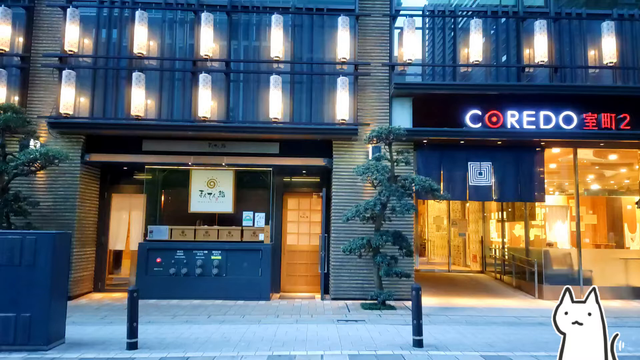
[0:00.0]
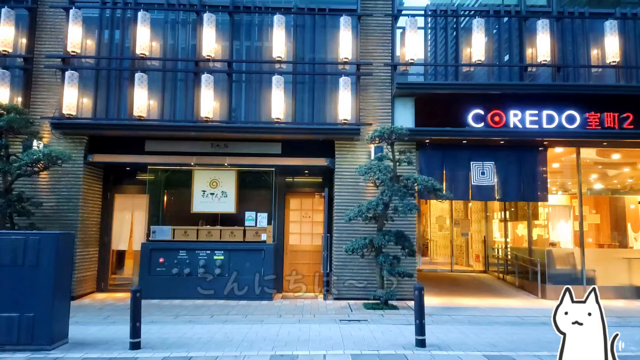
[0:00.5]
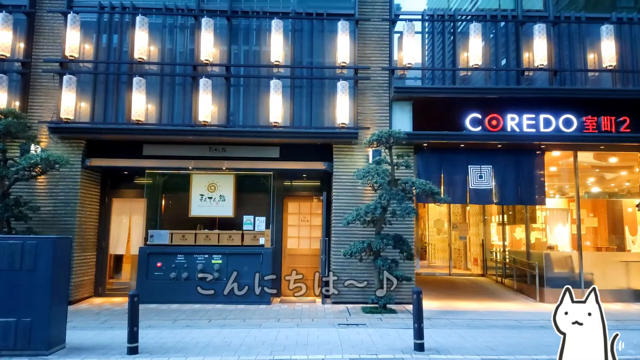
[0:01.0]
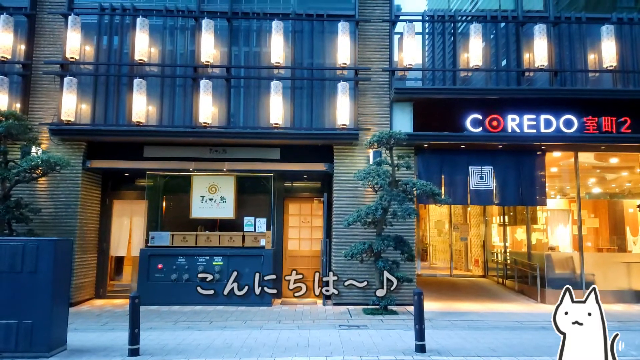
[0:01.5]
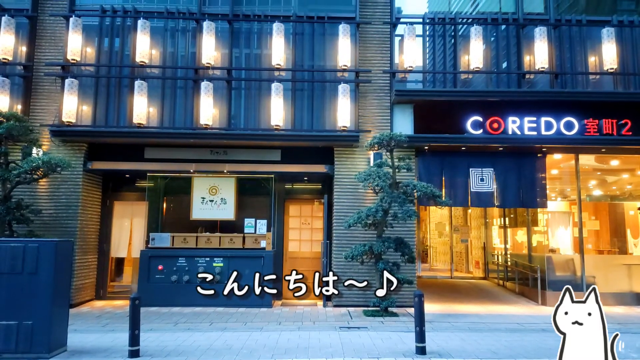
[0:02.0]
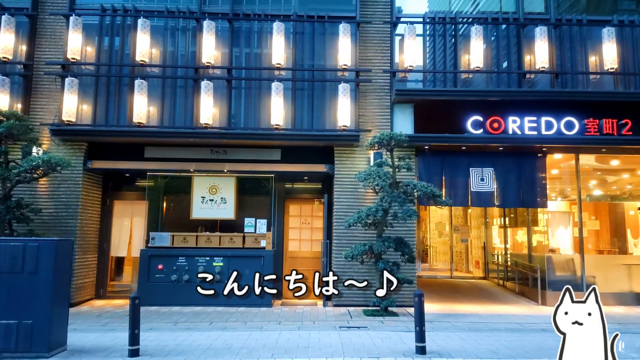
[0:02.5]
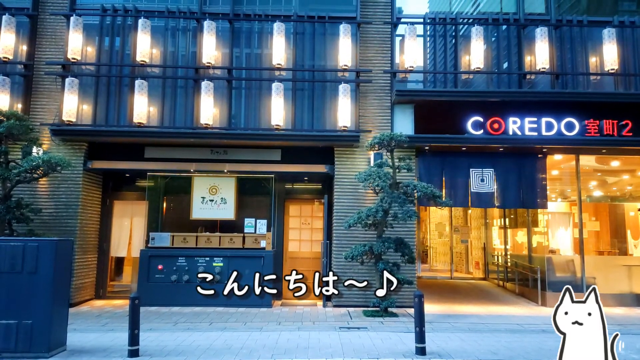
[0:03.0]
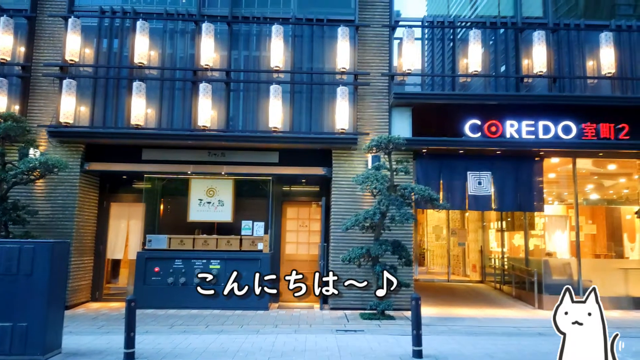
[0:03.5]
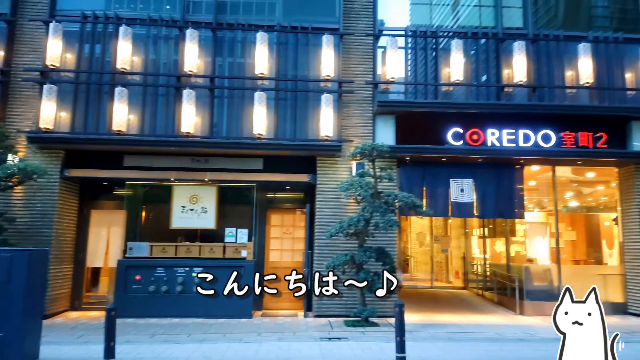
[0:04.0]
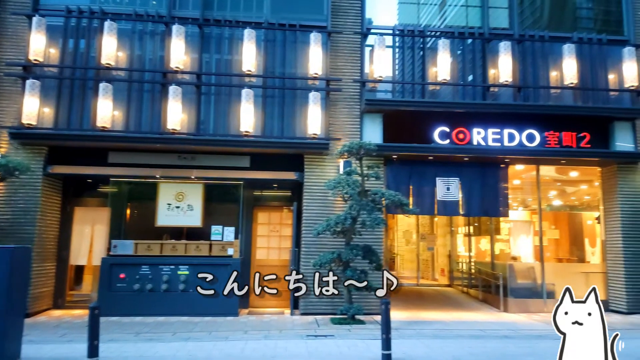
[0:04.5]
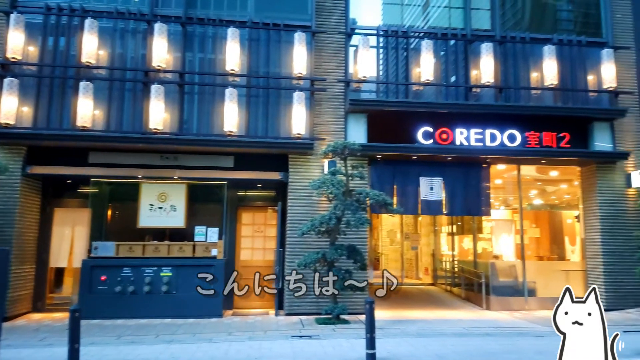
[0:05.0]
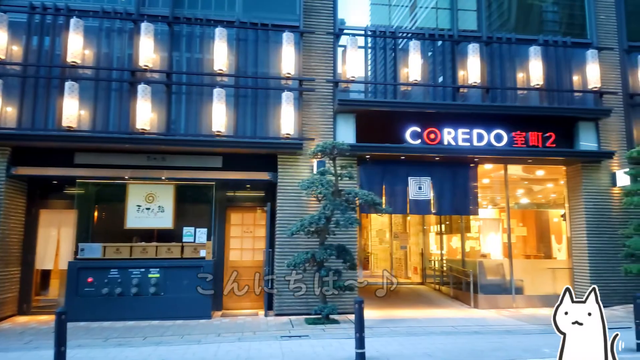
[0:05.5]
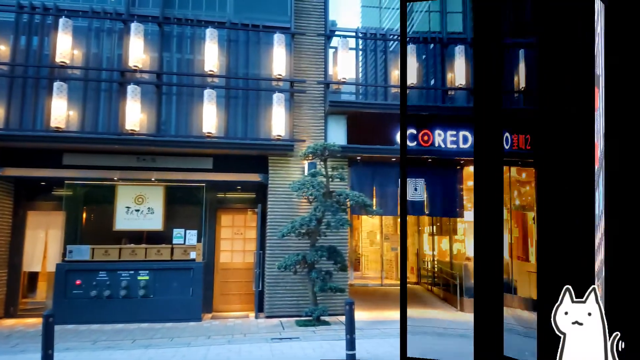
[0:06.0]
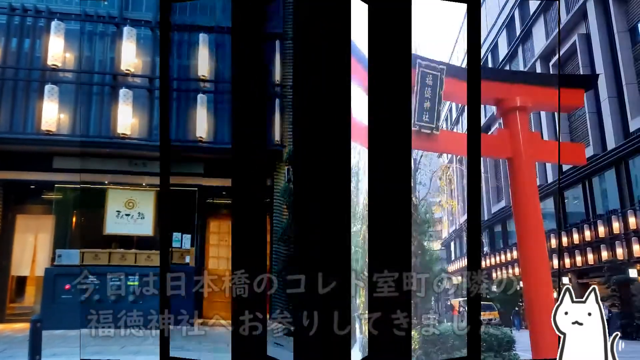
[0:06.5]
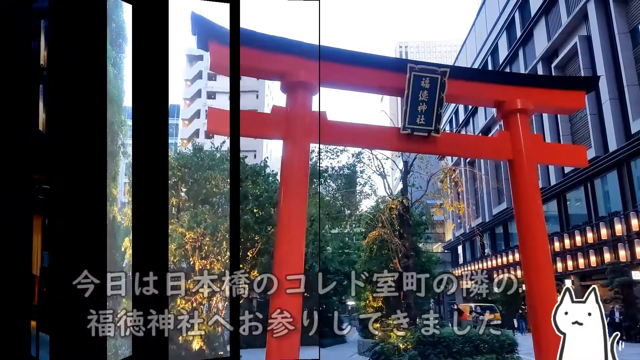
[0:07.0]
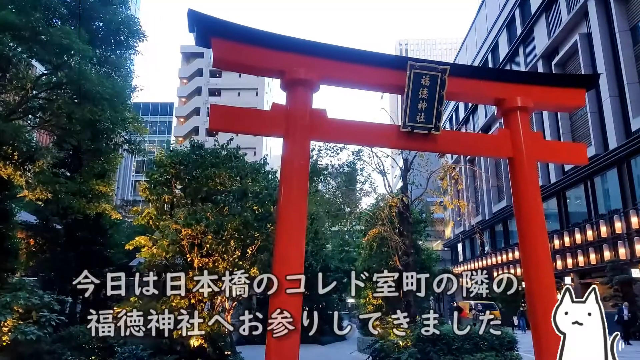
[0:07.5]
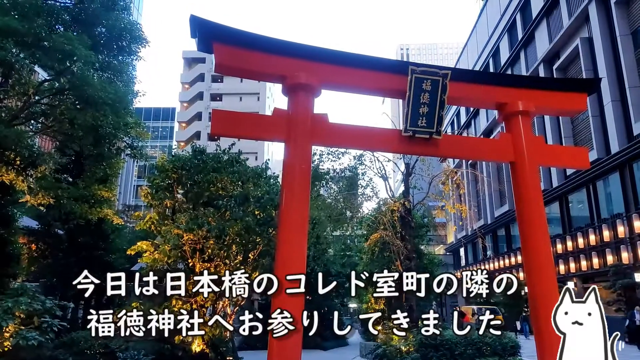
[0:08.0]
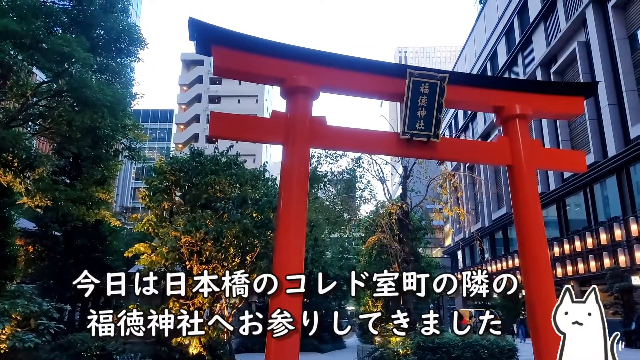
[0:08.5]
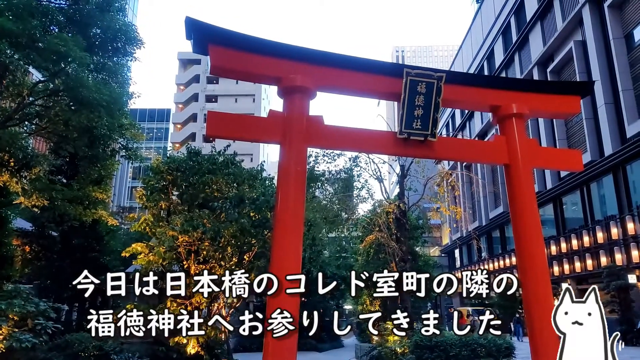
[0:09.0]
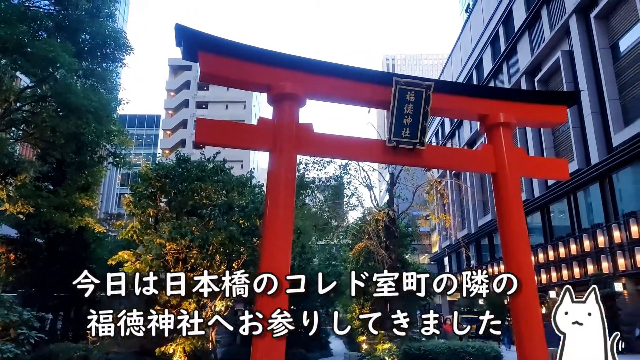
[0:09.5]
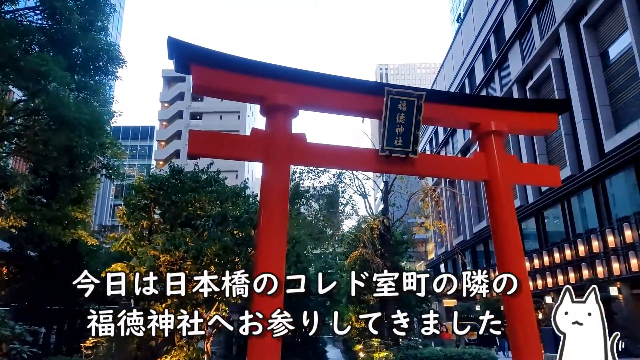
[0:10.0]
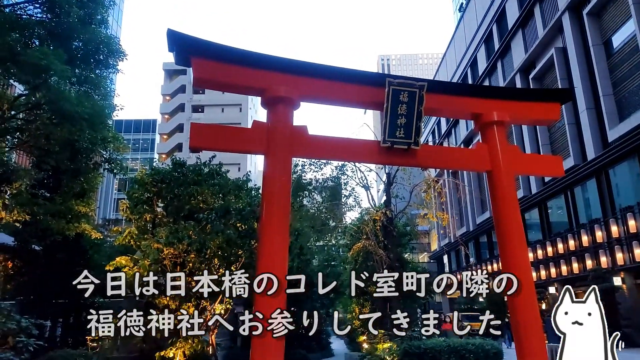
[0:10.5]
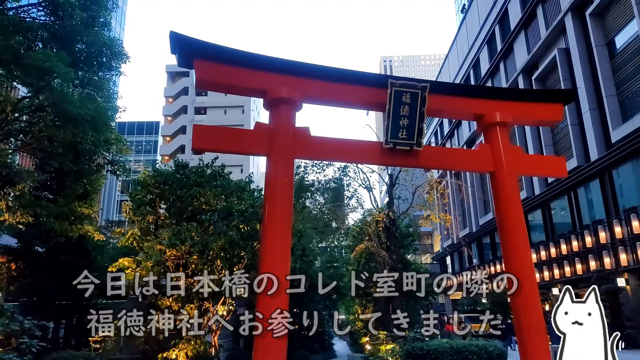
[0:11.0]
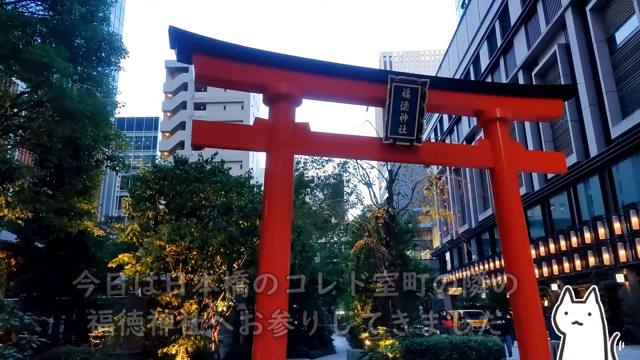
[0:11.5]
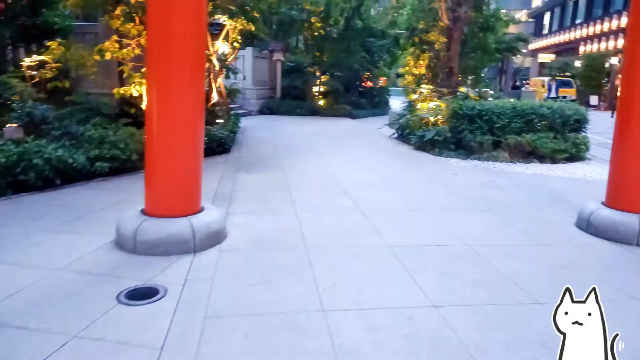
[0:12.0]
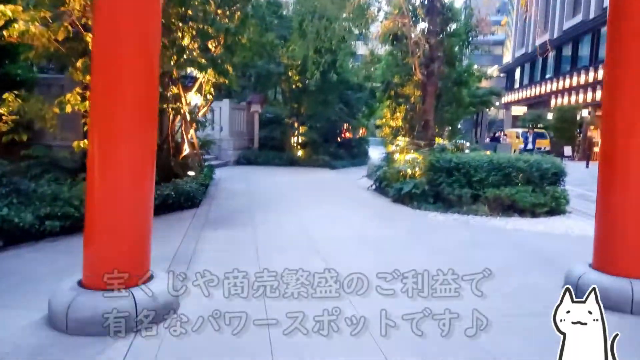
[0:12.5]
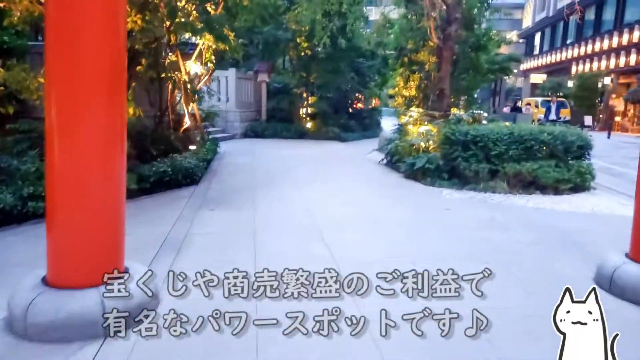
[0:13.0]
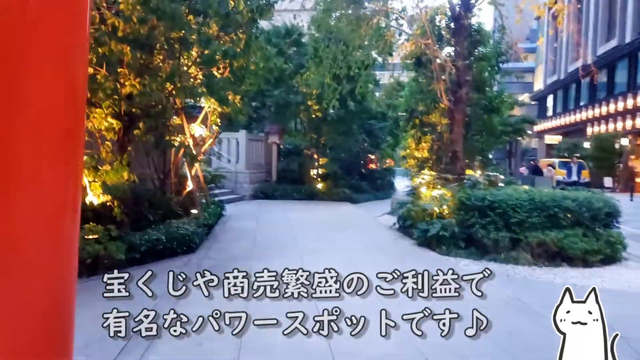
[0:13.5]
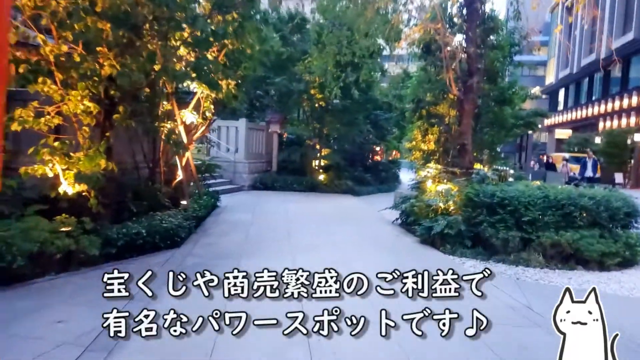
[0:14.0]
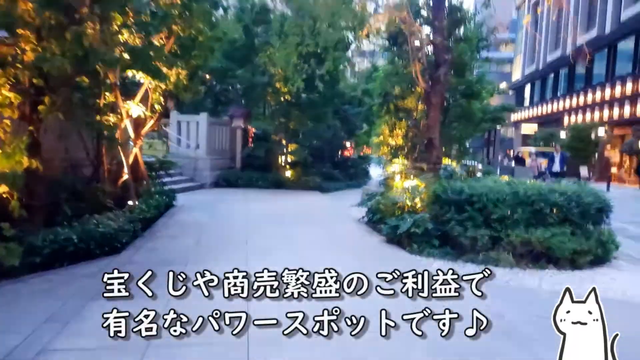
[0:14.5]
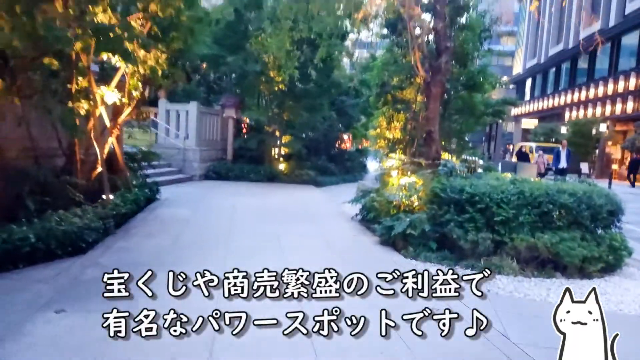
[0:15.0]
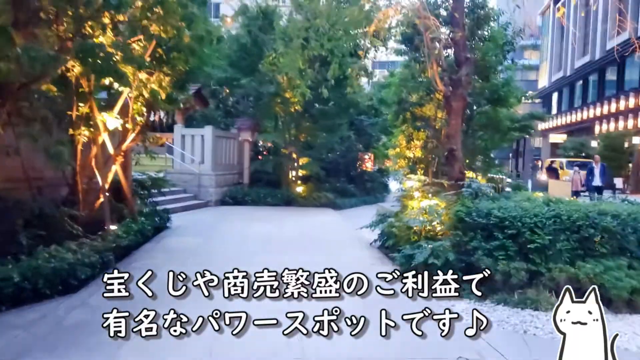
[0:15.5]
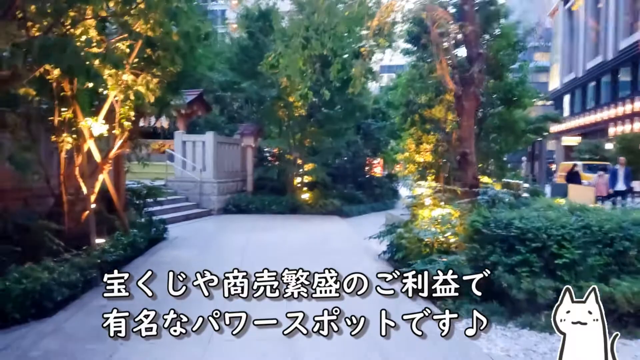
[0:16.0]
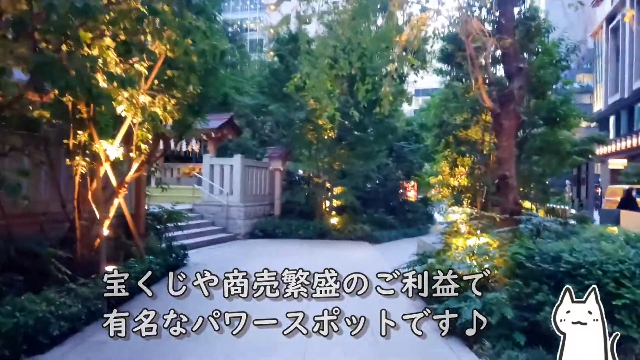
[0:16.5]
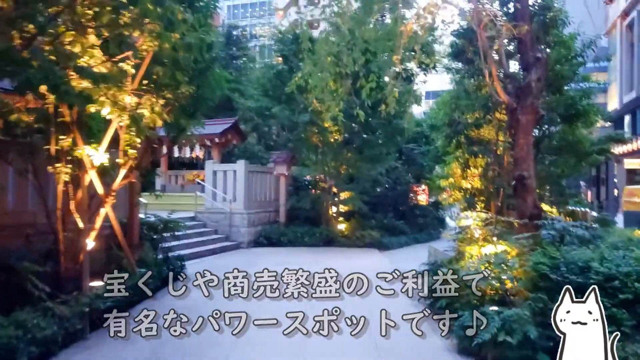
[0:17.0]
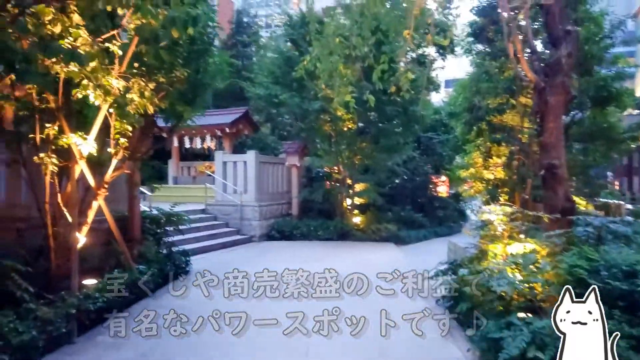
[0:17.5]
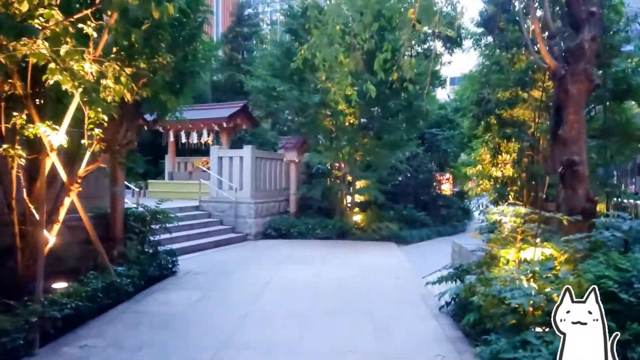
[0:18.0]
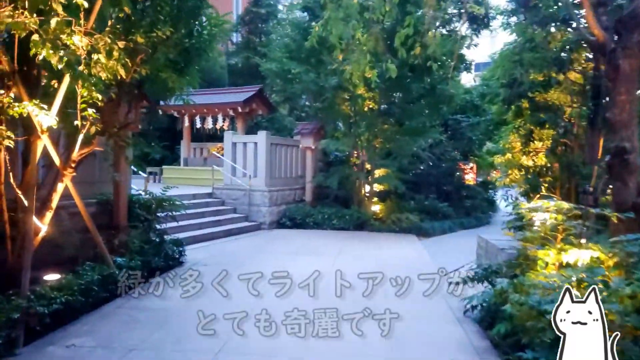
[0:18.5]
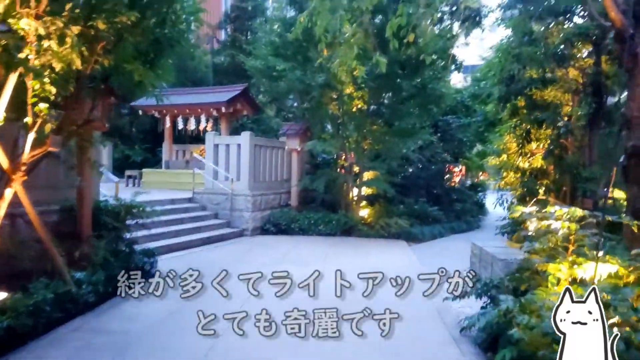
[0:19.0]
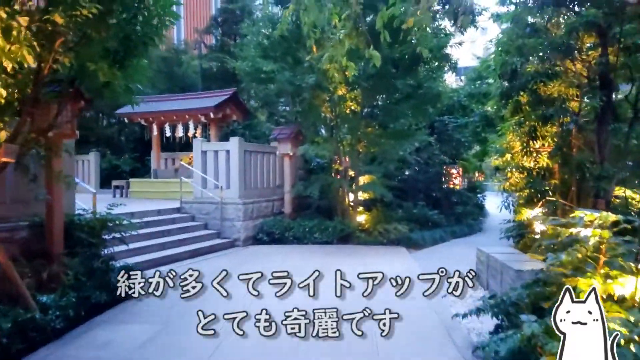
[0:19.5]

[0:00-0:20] Three office buildings appear, and each section of a building has ten lights, ten windows: five on the upper floor and another five on the next level. There are two doors to the shop that is below each office building in the middle. In the front there is an office to admit people into the building. The next building has all-glass windows across the front, with an office building underneath on the first level of the store. The store is called Corredo, spelled C-O-R-E-D-O. Another language, possibly Japanese, is written on the building. A third building is to the furthest left, and there is one tree in the farthest left corner of the screen. The outside of the building has a stacked bamboo pattern type brick in the front. Each building is accented with darker shades and black signage or black backdrops on a lit display with white lettering and red lettering. There is a cat-like creature at the bottom right of the screen. The middle building has two doors: the door on the right has 12 panes in the window, and the door on the left has a large see-through glass area.